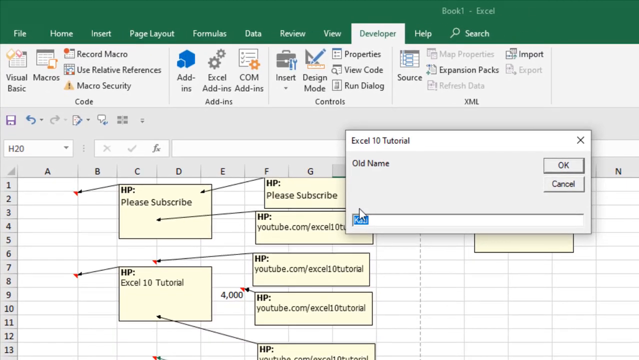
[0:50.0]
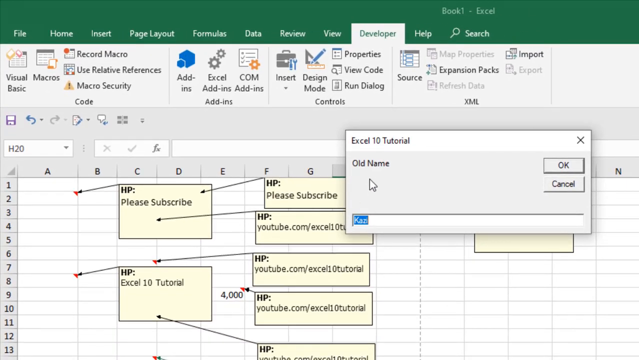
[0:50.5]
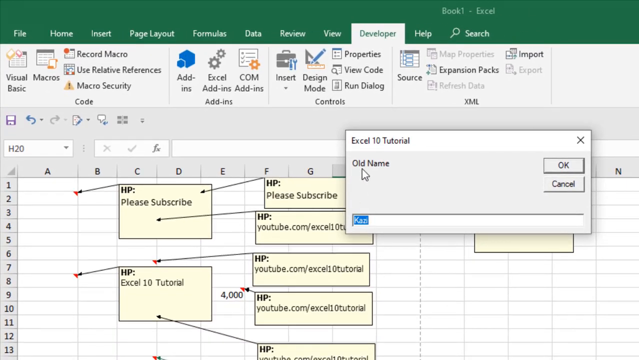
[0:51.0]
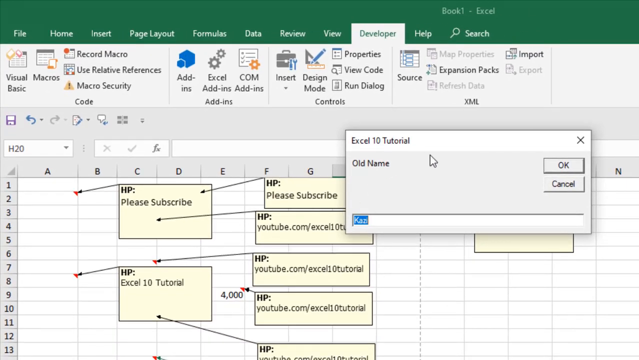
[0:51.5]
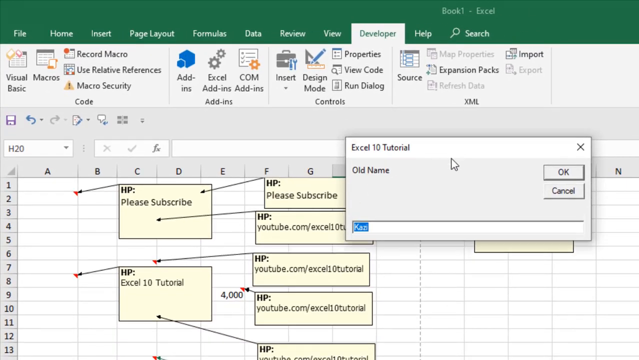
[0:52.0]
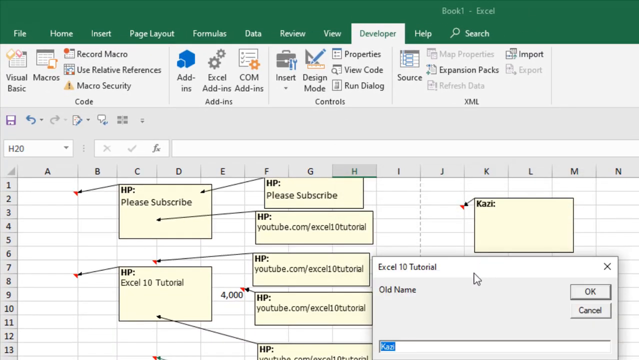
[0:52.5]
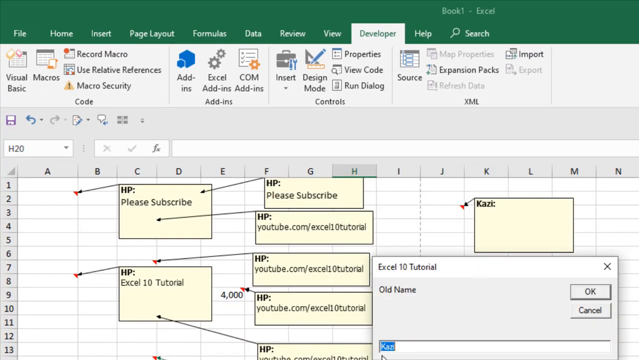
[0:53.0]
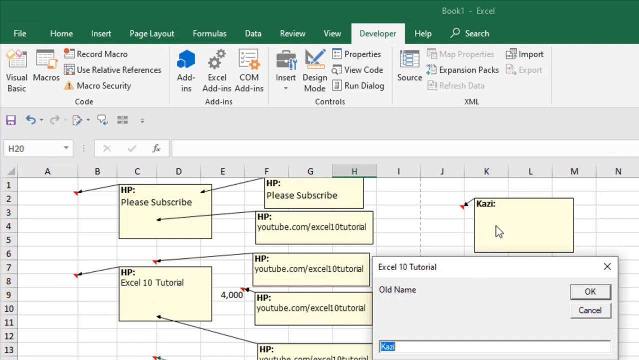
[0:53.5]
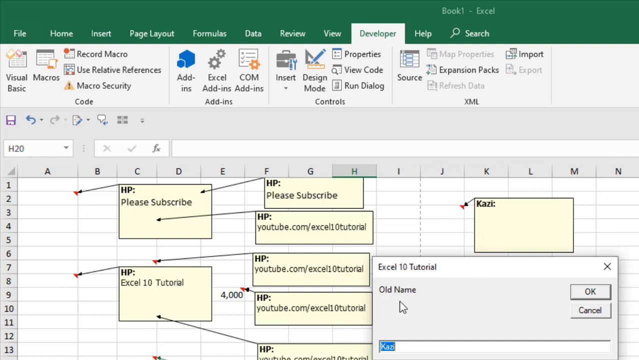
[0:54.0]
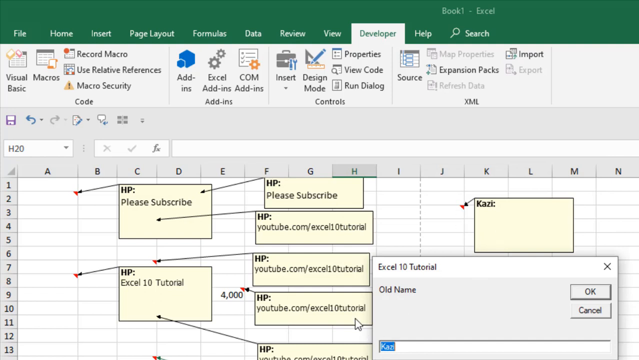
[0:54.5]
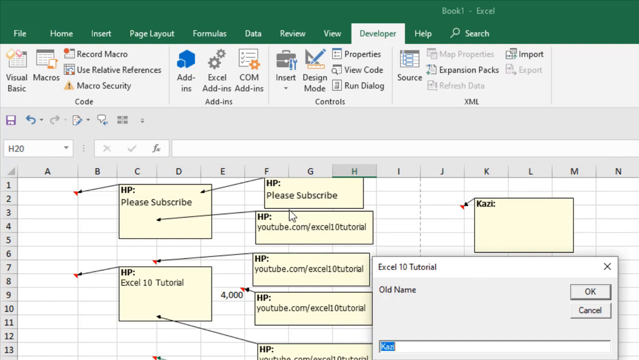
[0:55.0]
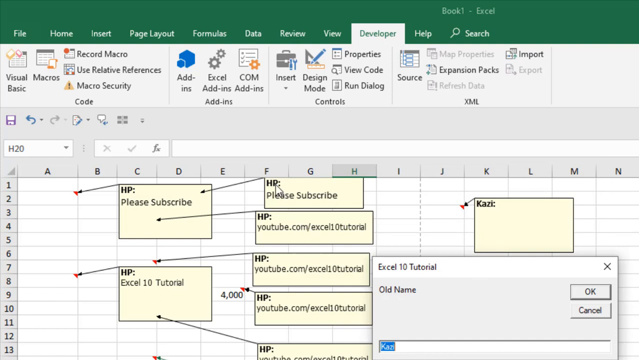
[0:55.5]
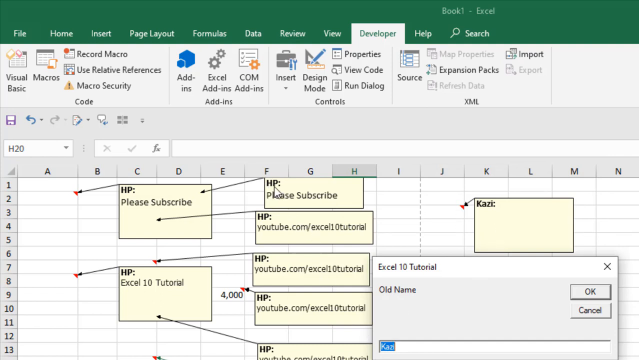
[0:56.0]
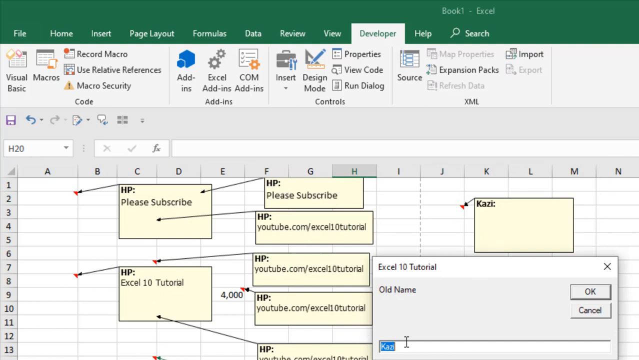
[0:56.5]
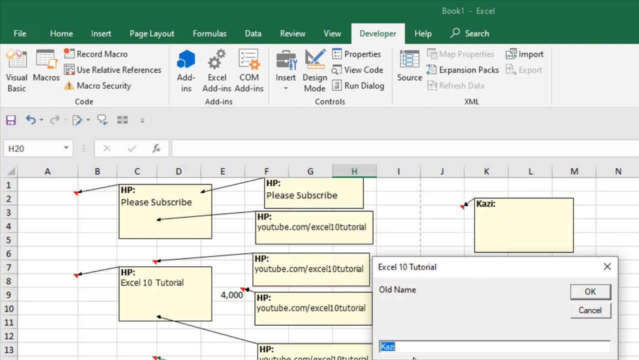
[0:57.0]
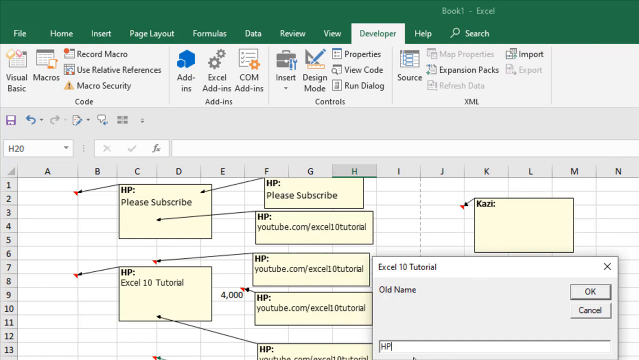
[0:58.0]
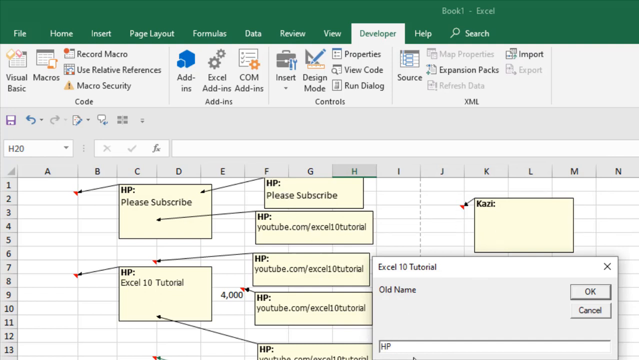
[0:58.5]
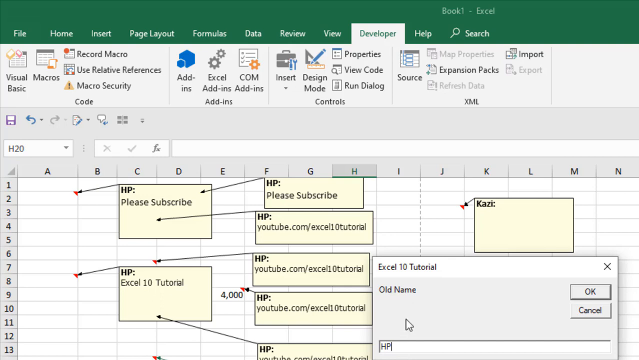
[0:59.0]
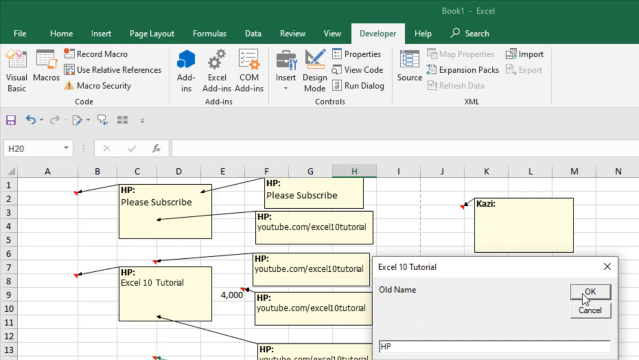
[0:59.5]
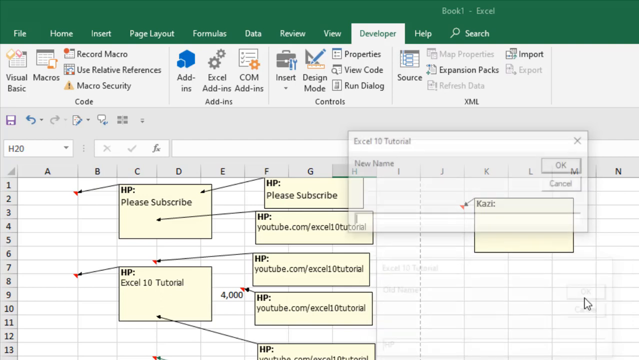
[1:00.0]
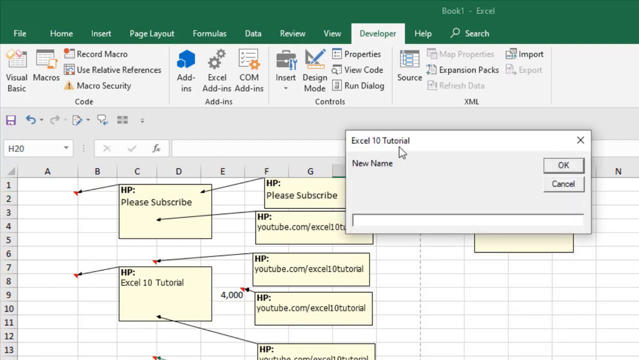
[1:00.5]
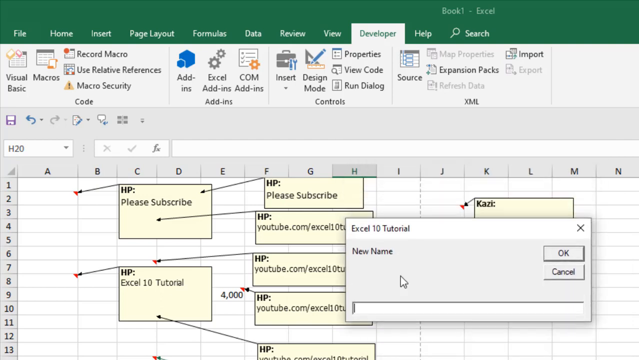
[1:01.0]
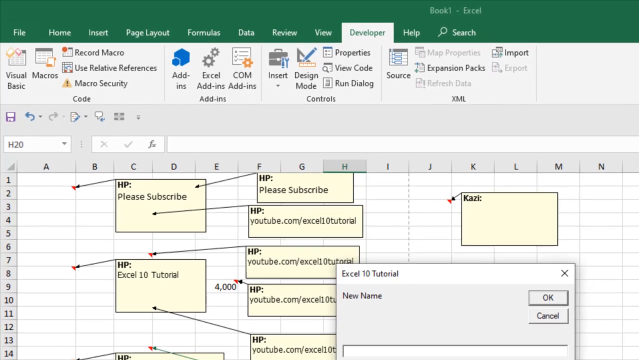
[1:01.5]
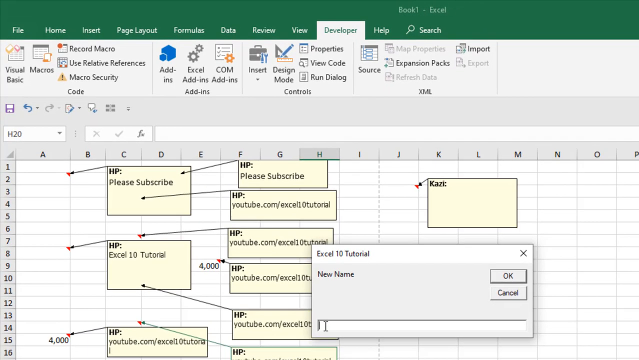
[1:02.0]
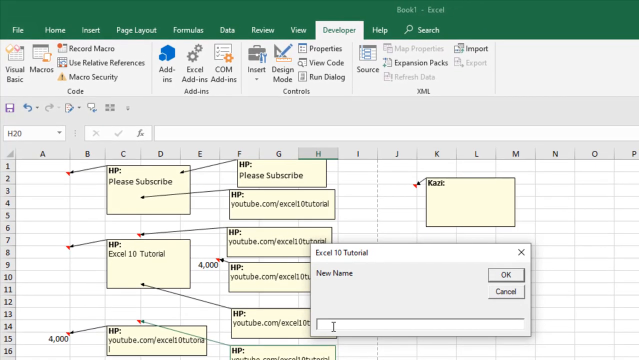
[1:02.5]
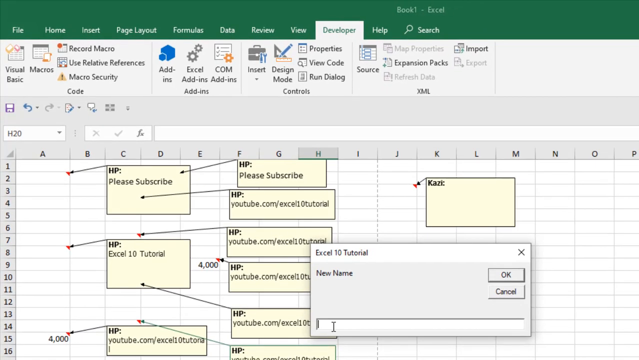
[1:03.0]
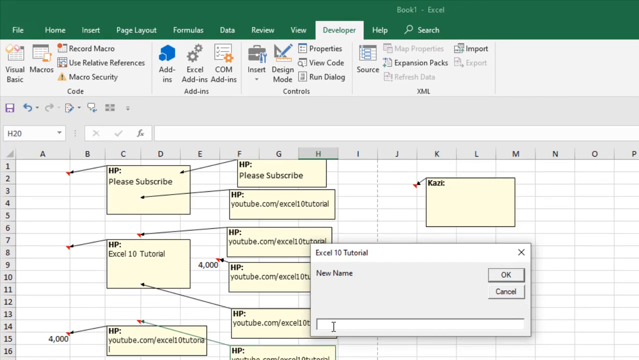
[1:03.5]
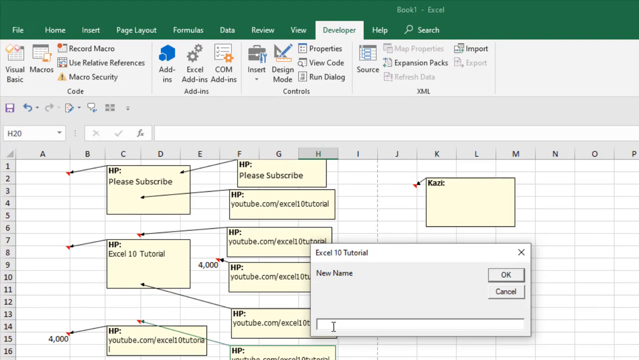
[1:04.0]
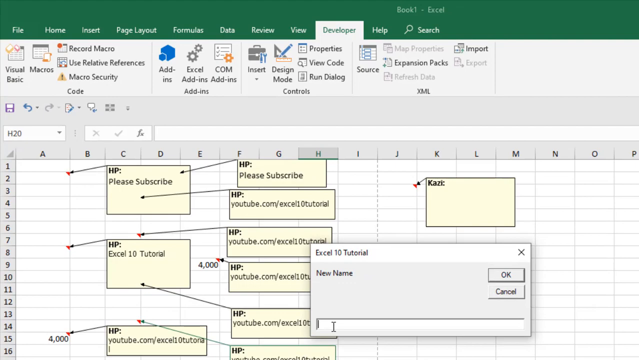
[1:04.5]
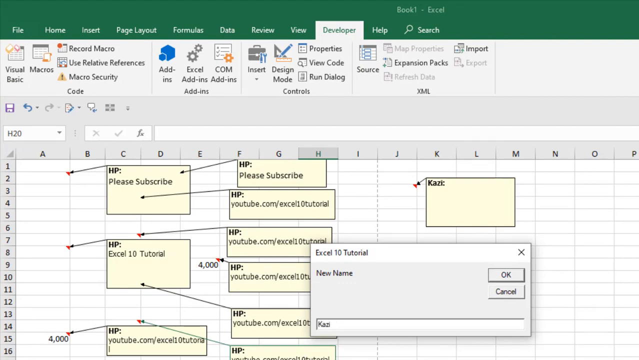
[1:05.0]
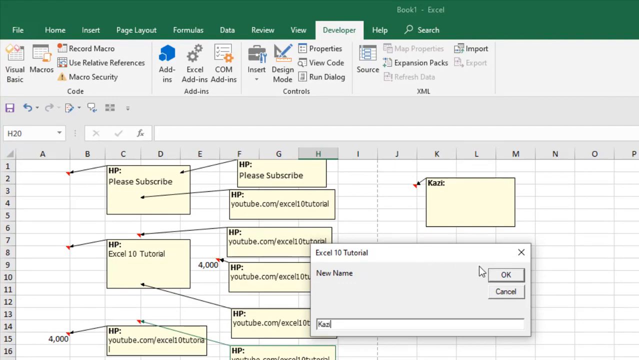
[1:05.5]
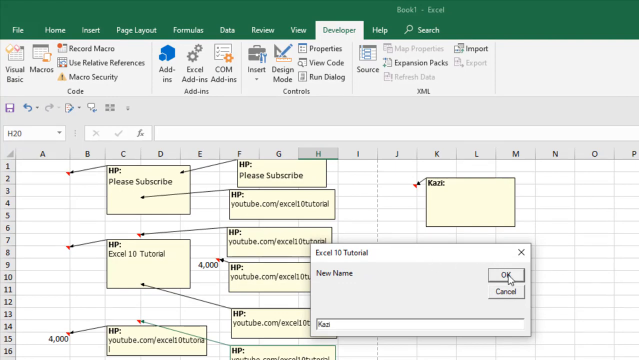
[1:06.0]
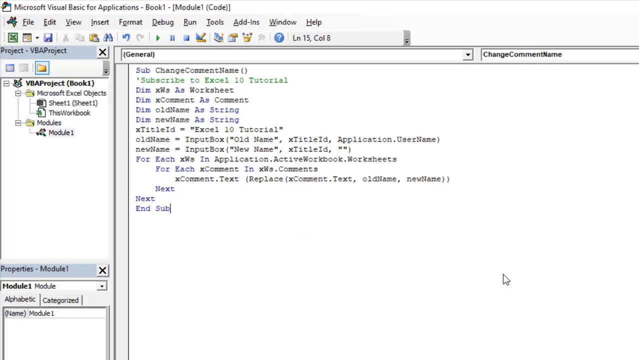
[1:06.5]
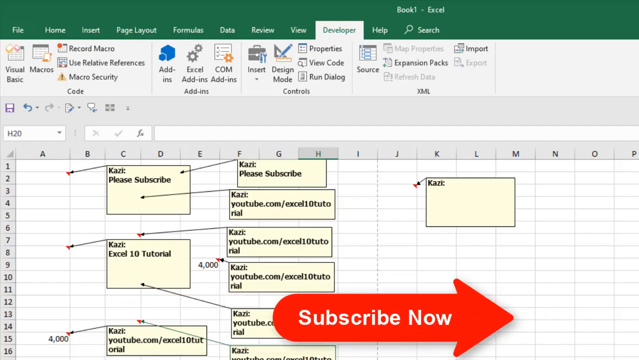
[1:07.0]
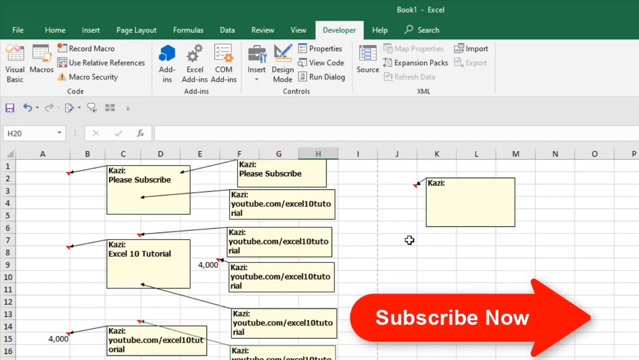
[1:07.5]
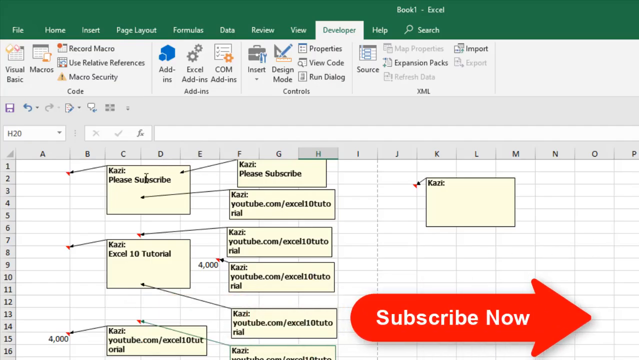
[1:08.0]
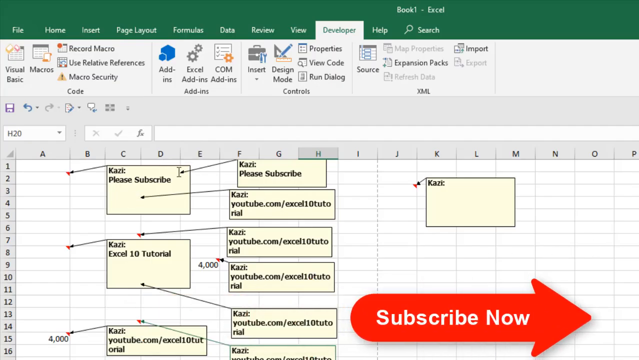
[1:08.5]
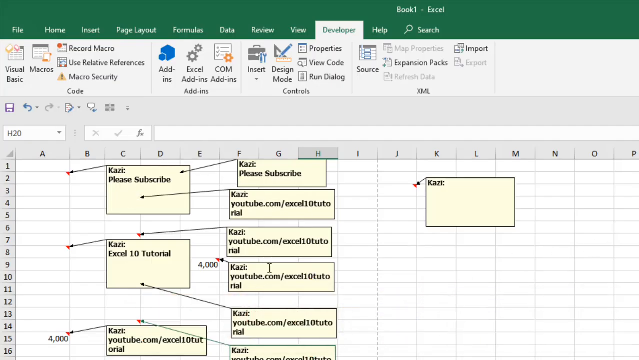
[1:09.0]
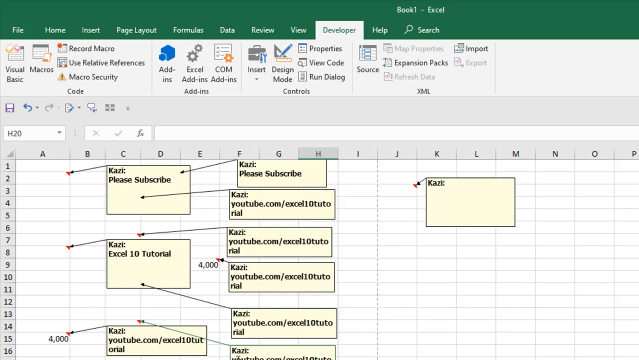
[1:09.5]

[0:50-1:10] When he clicks play, a text box opens. The text "old name, new name" appears, and two text boxes pop up, one for the old name and one for the new name. After the old name and then the new name are entered, the names of all the links in the Excel sheet change to the new name, suggesting the code is possibly used for renaming rather than as a template.